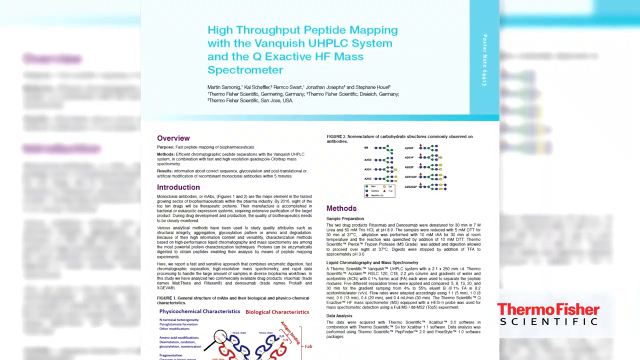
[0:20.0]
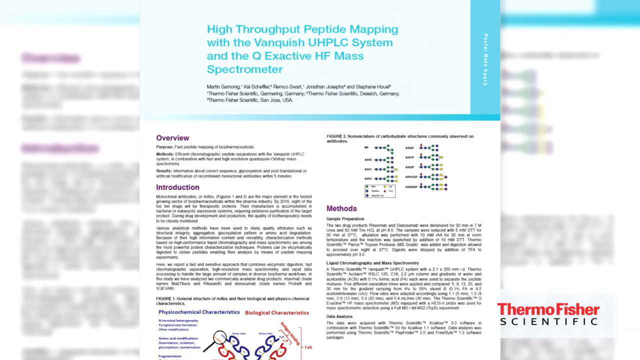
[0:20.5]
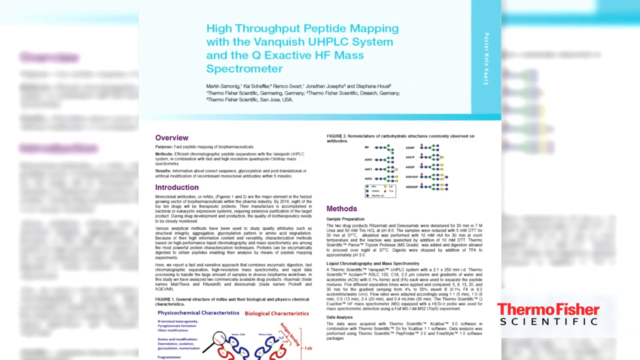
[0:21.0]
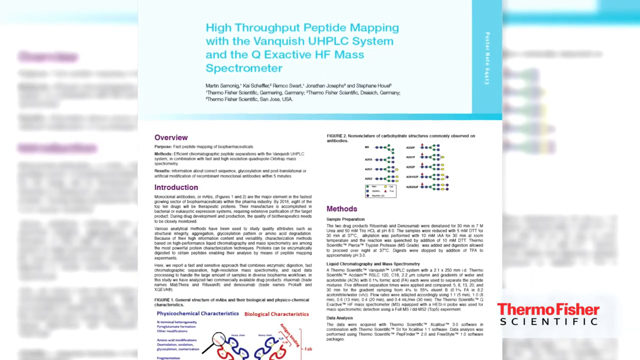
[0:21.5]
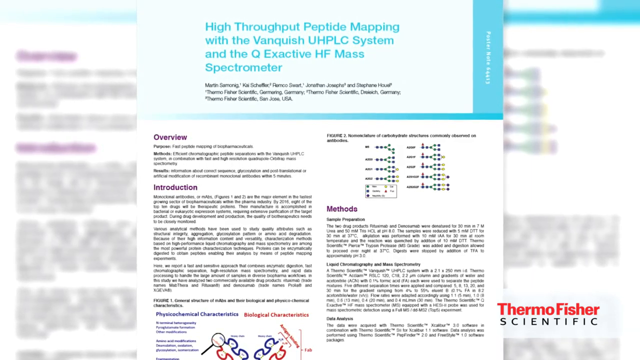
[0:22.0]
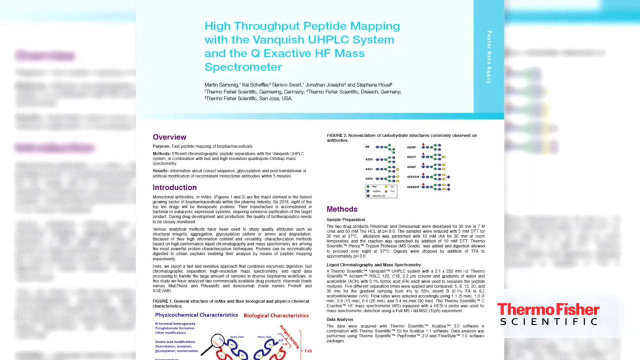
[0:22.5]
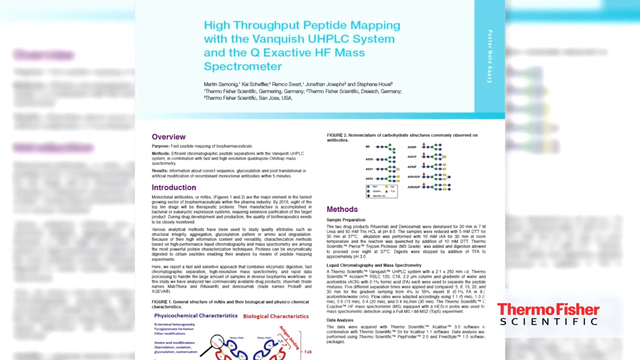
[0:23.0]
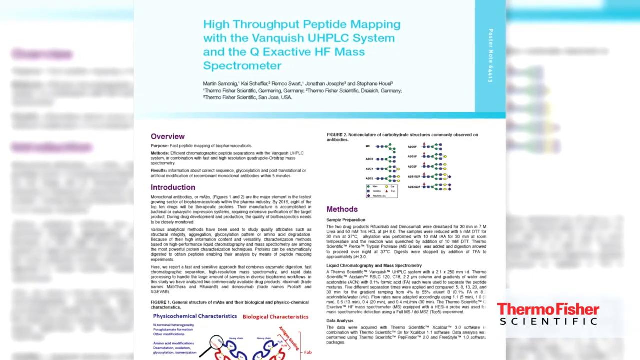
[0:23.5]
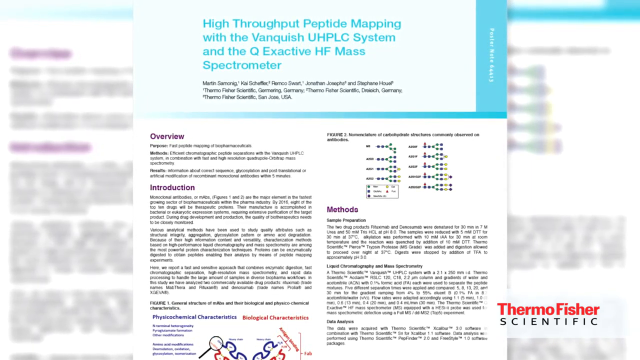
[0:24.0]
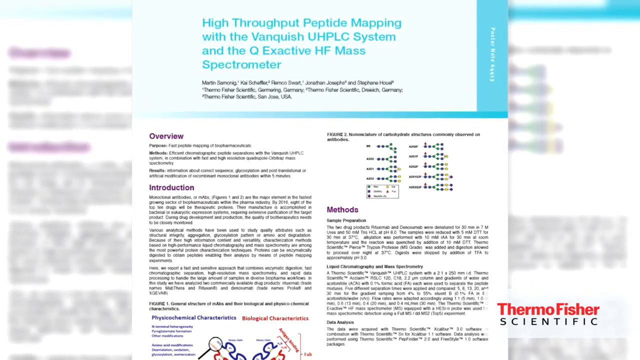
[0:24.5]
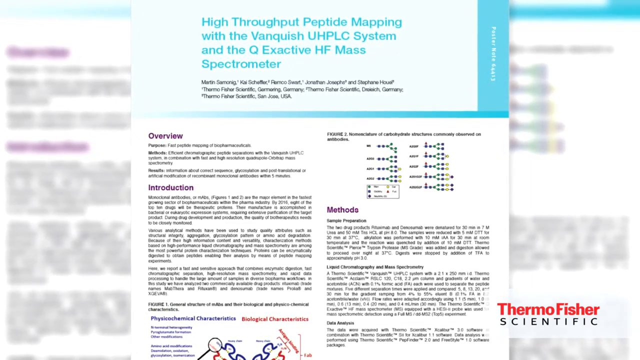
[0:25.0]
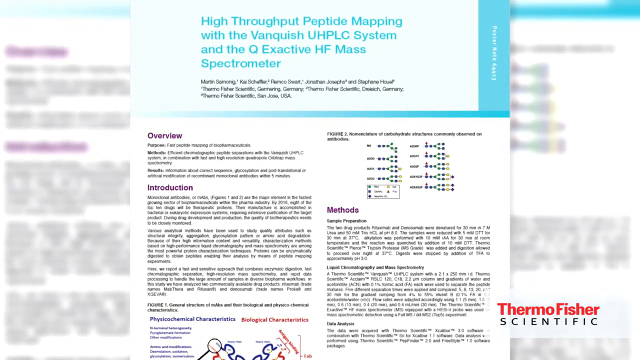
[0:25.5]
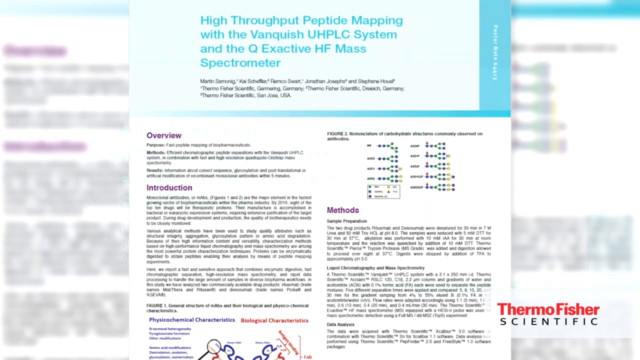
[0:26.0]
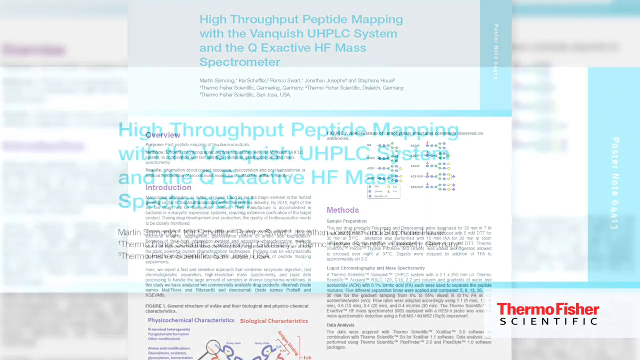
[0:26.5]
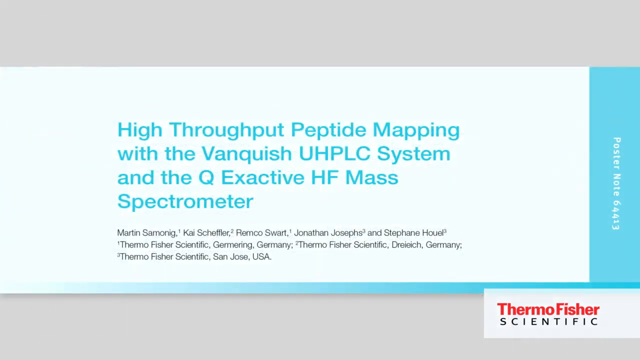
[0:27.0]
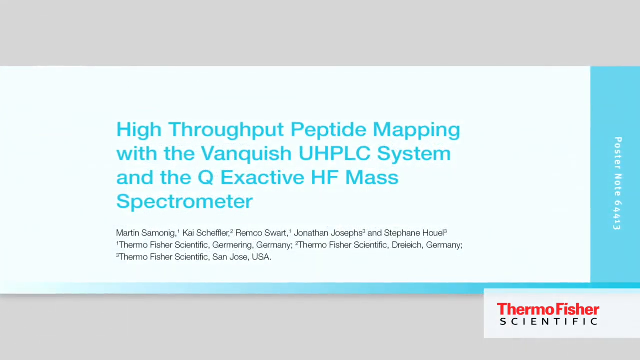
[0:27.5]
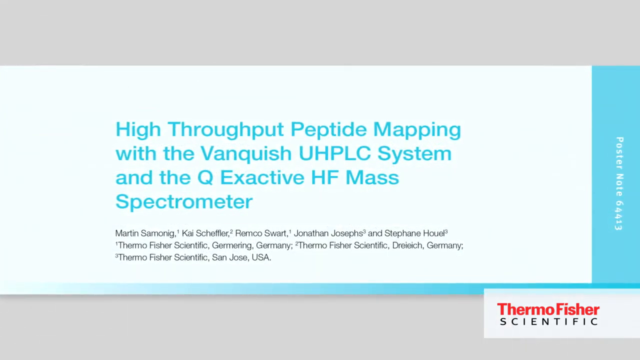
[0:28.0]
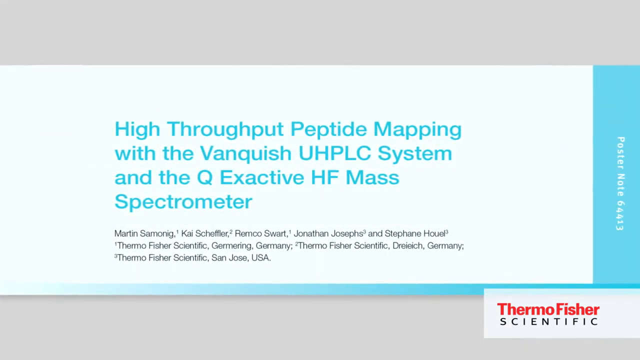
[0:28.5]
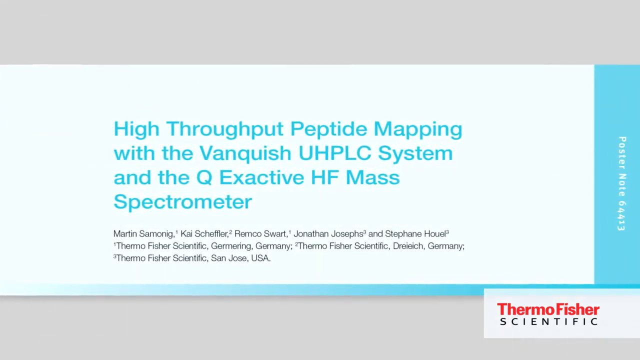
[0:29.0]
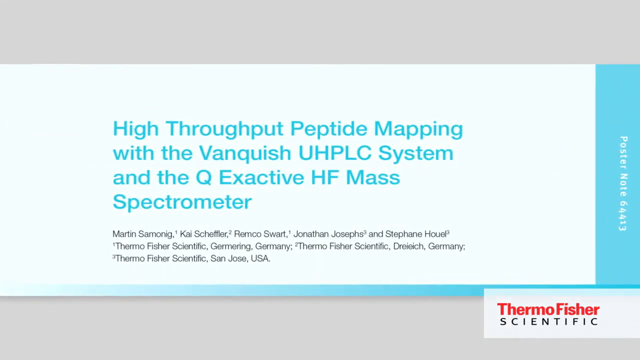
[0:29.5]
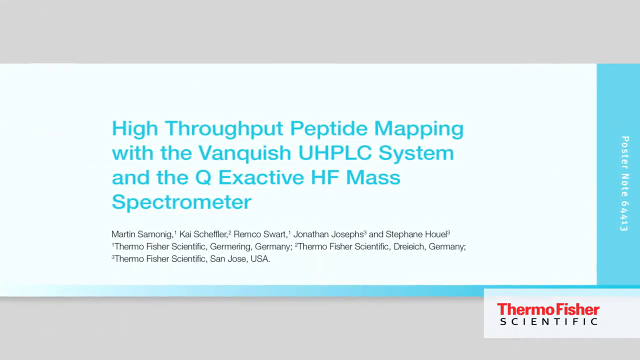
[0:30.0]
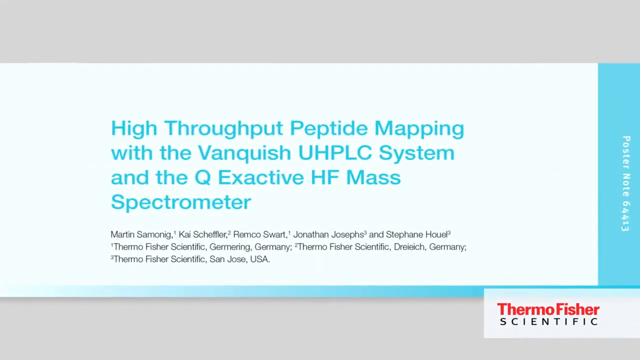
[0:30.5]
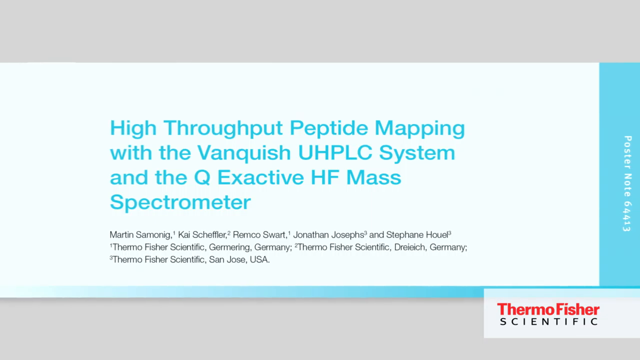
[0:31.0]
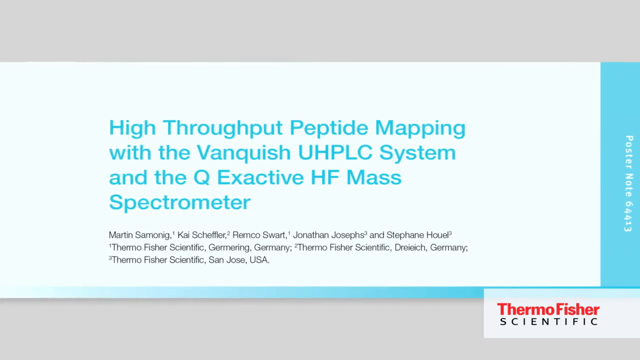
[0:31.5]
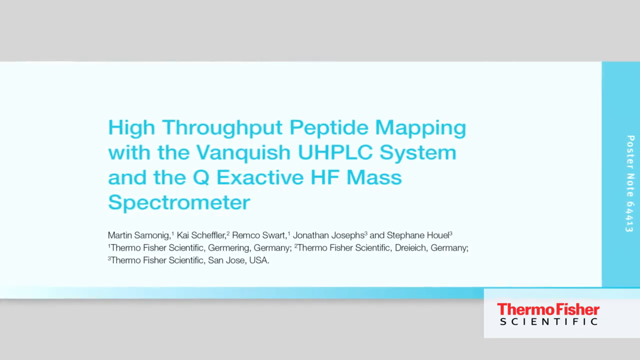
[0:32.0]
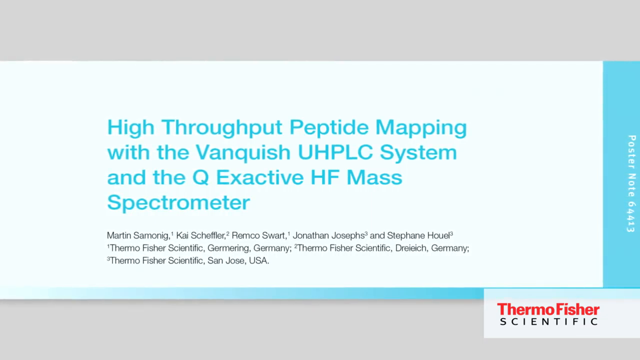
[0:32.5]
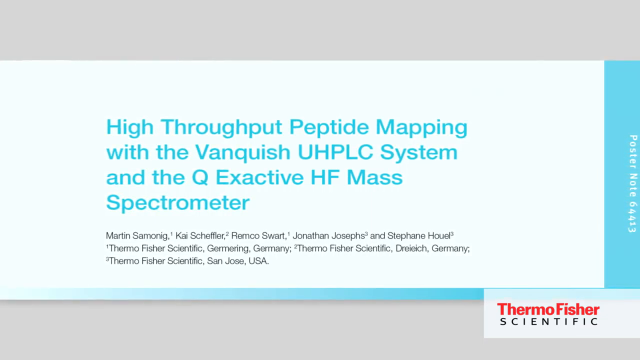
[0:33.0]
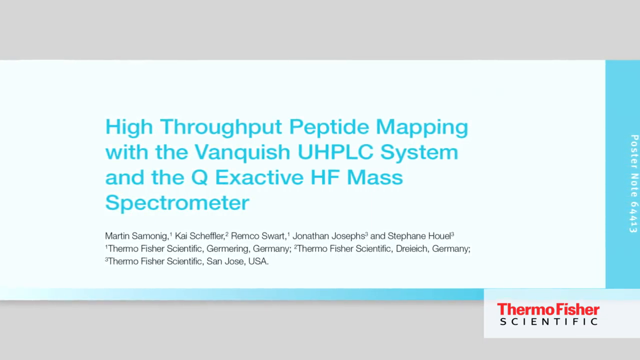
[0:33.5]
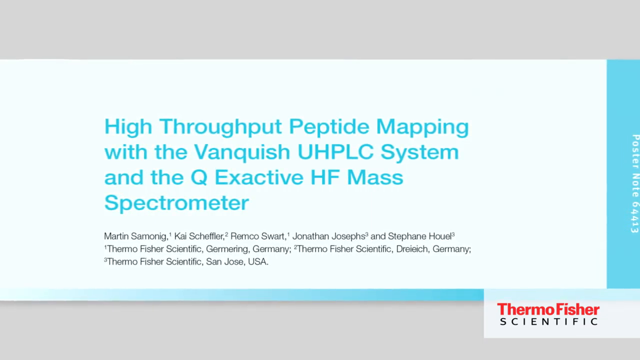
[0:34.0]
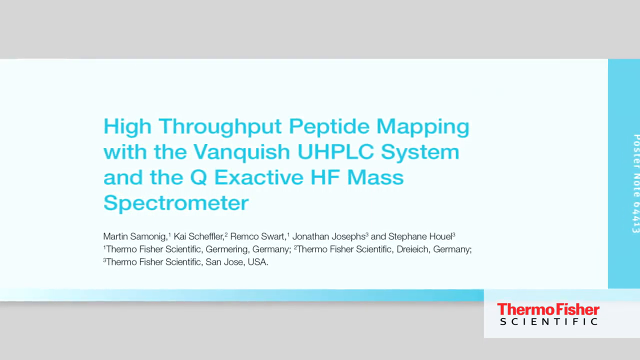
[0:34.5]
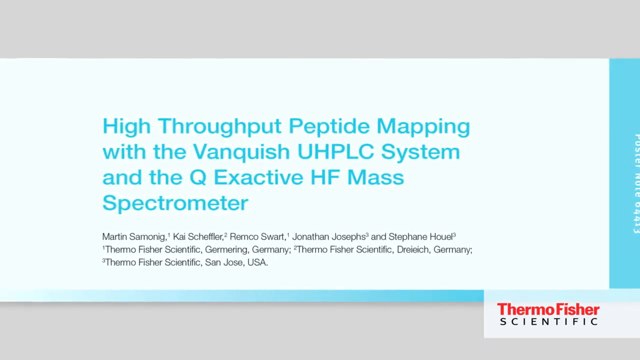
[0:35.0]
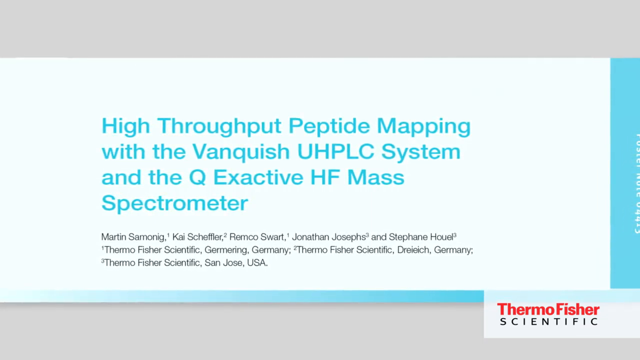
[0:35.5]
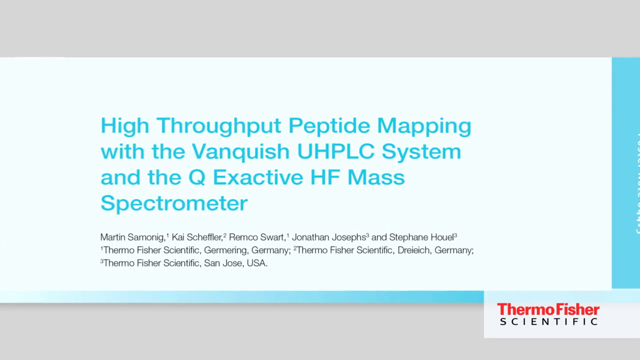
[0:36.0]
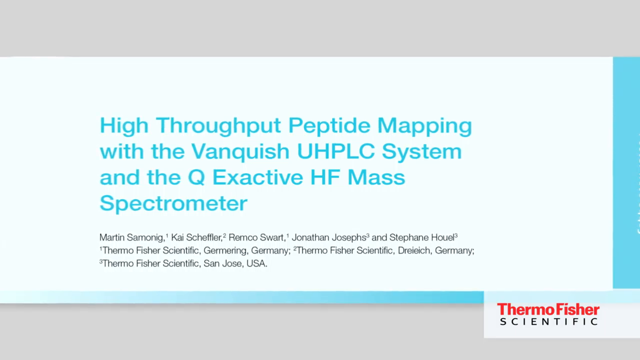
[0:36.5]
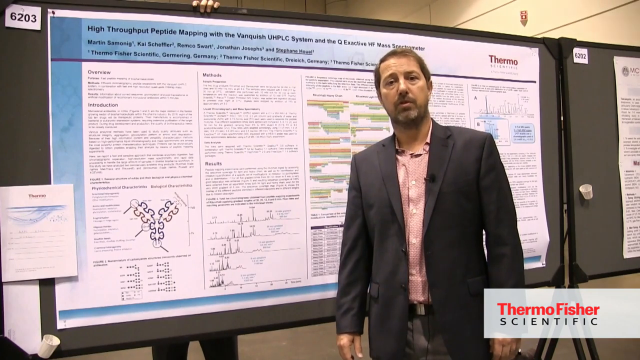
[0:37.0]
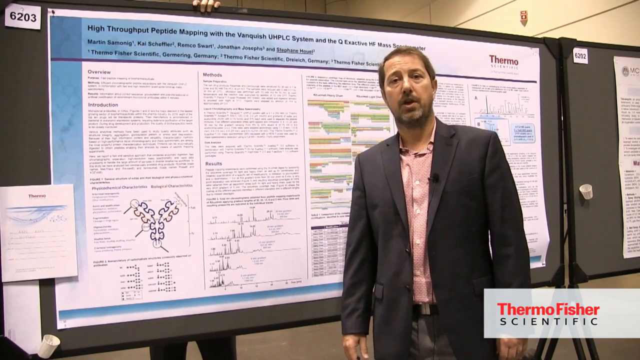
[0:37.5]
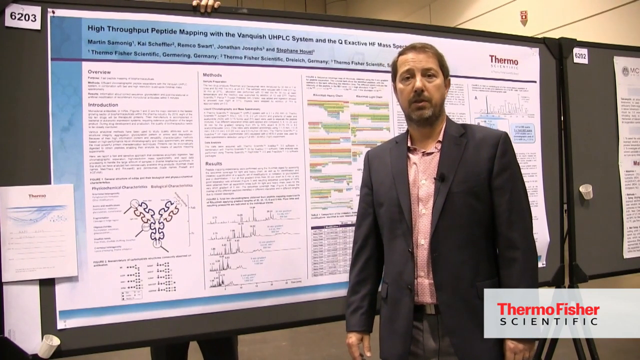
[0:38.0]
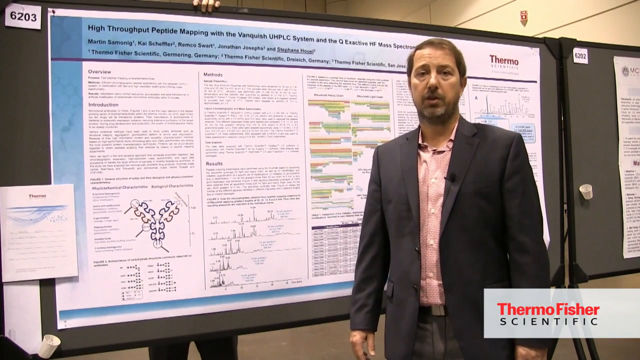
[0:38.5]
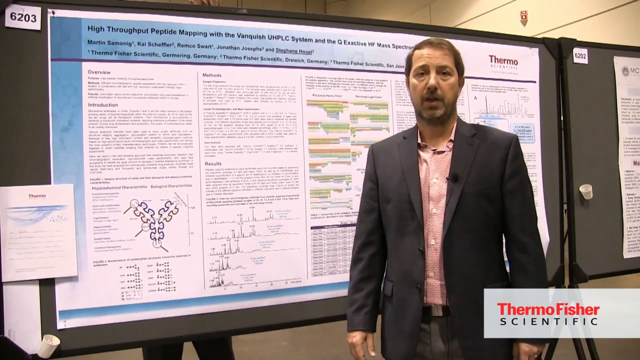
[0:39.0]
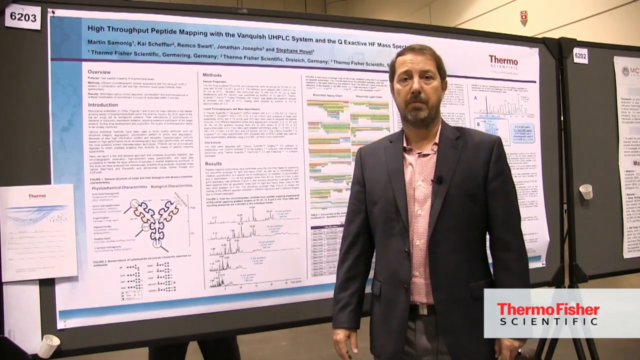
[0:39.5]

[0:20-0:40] The doctor stands at the front, wearing a gray suit jacket over a pink collared button-down shirt.